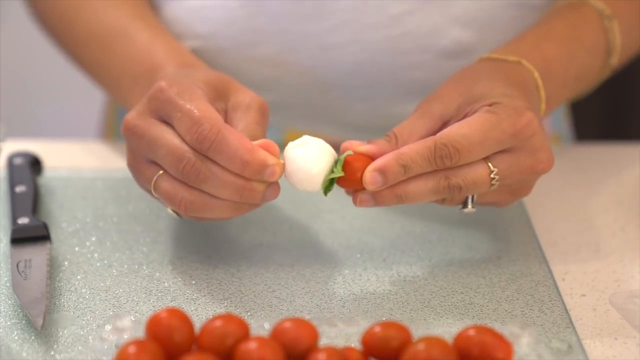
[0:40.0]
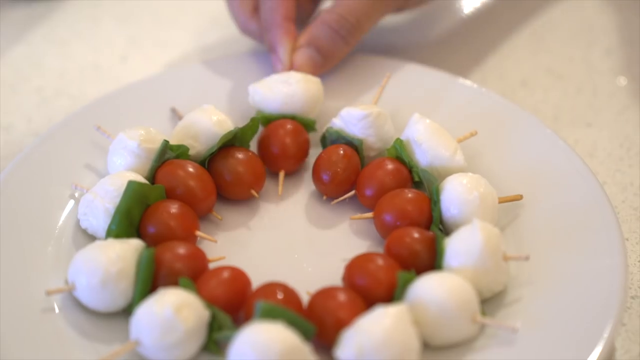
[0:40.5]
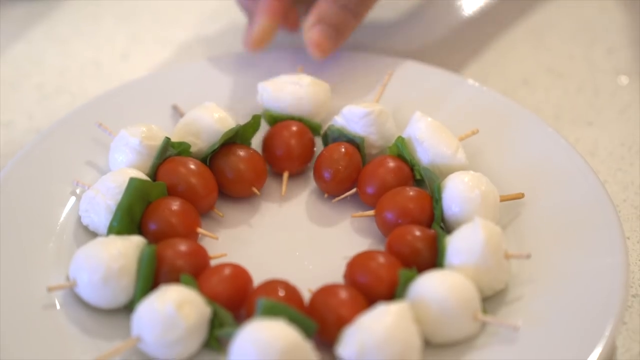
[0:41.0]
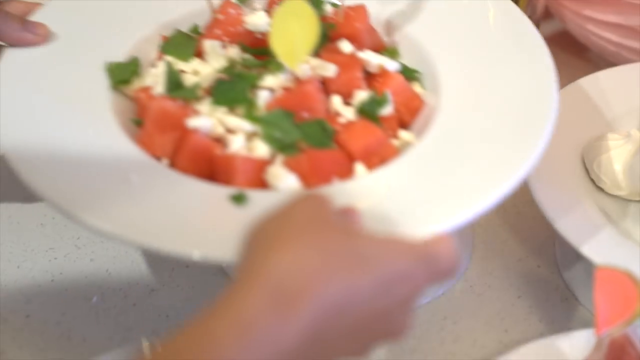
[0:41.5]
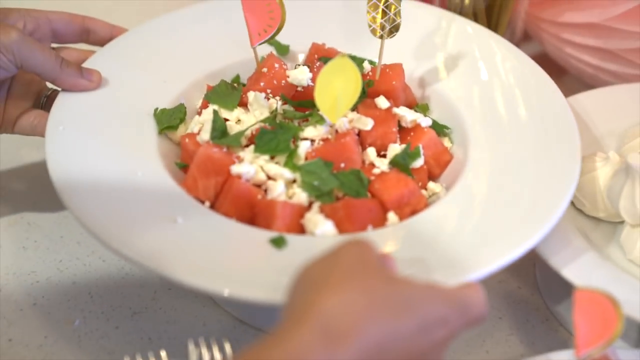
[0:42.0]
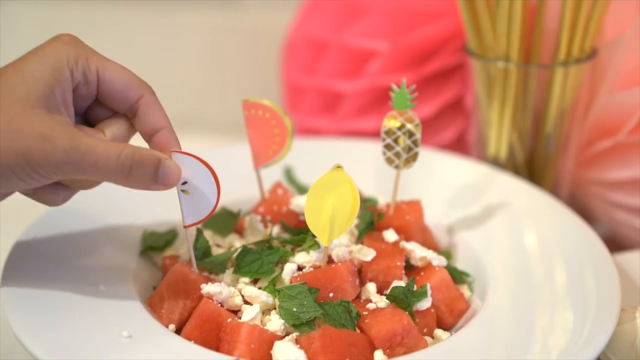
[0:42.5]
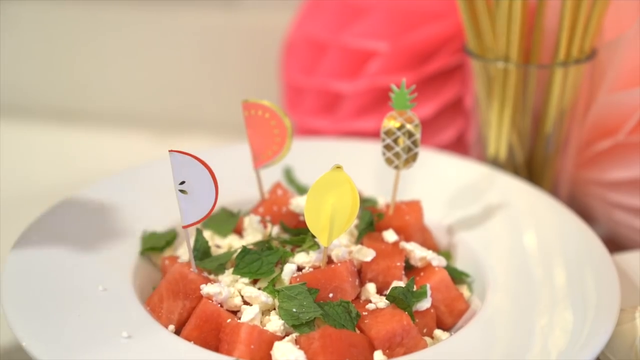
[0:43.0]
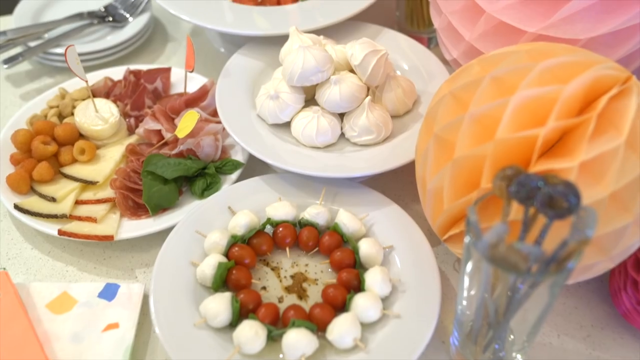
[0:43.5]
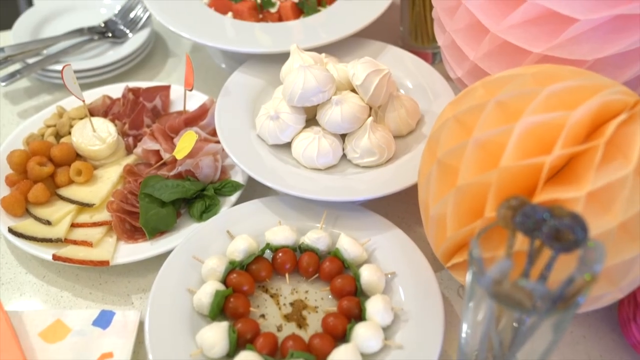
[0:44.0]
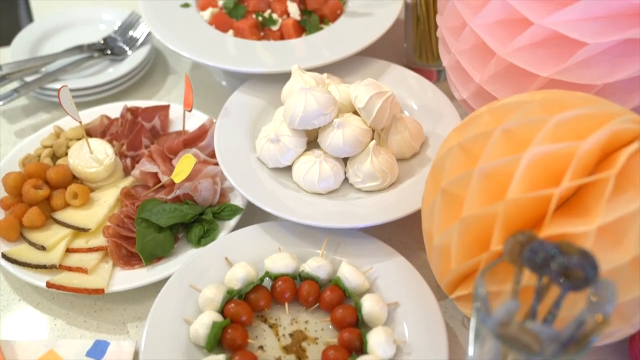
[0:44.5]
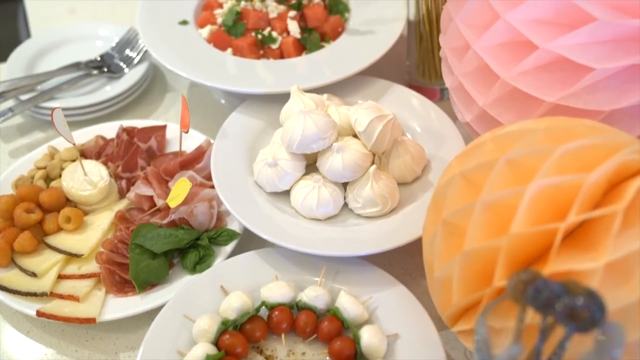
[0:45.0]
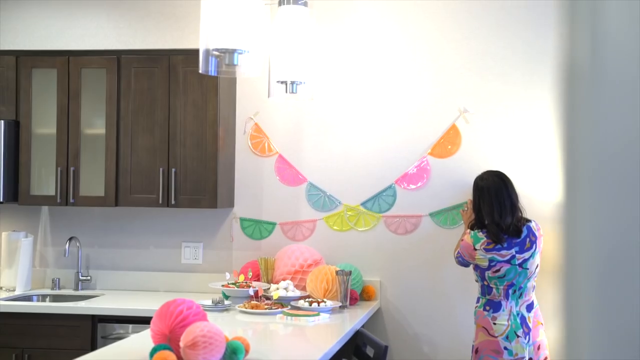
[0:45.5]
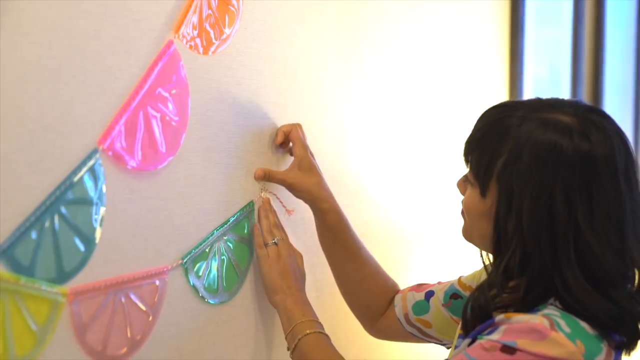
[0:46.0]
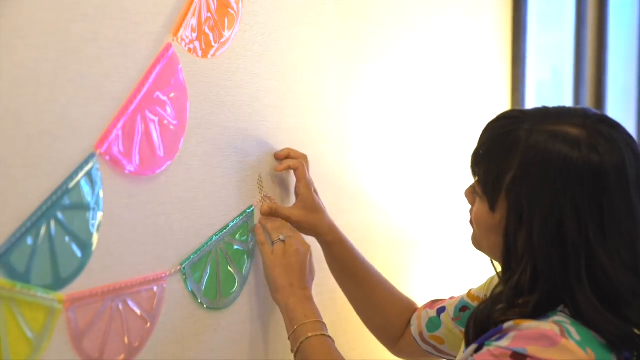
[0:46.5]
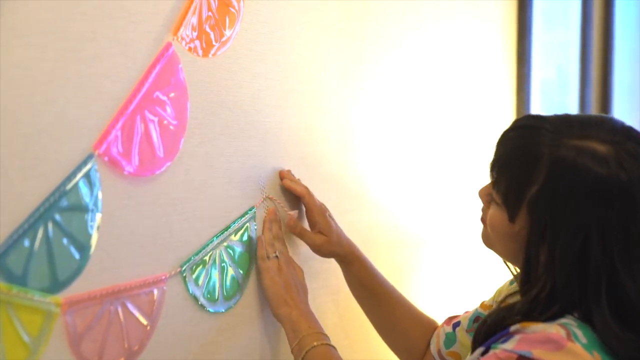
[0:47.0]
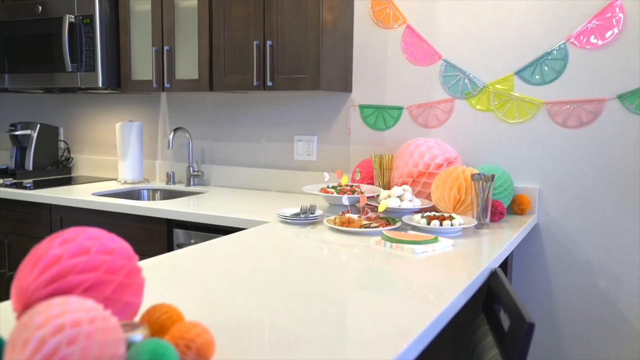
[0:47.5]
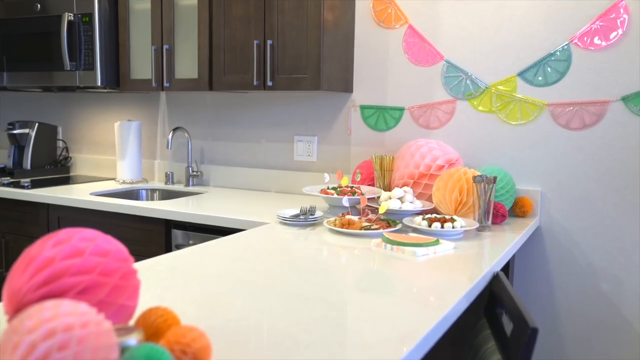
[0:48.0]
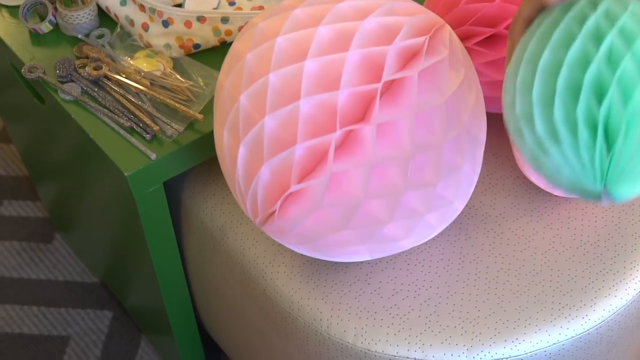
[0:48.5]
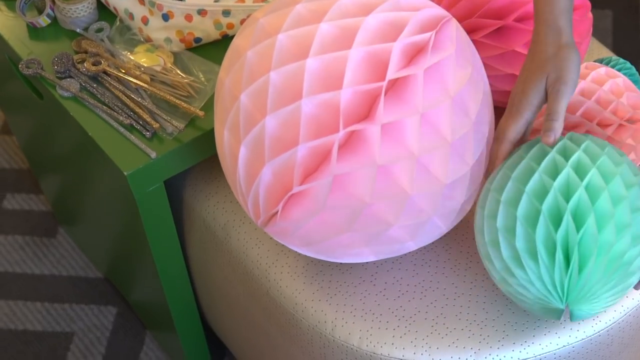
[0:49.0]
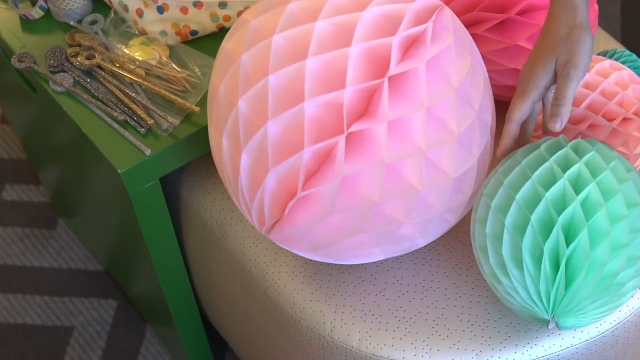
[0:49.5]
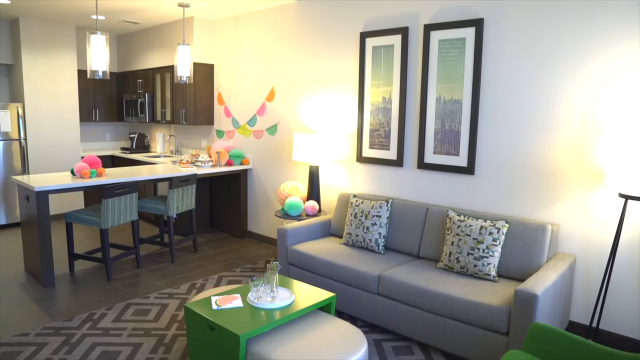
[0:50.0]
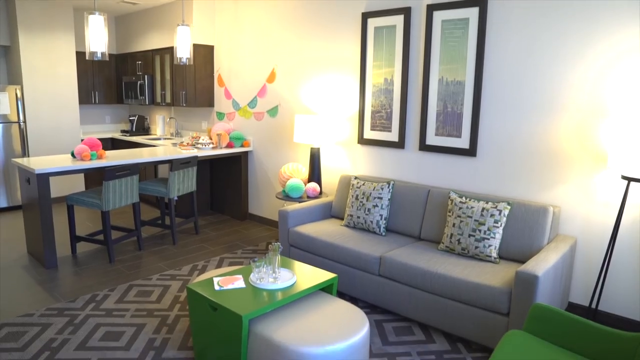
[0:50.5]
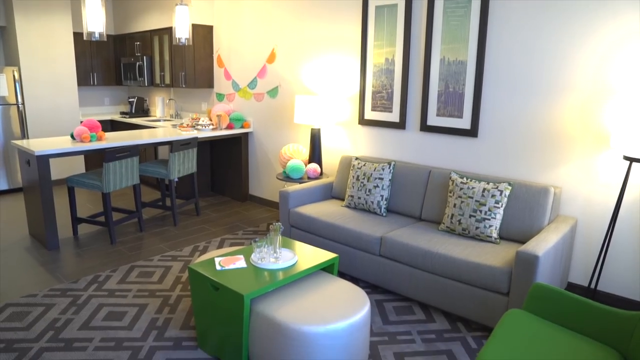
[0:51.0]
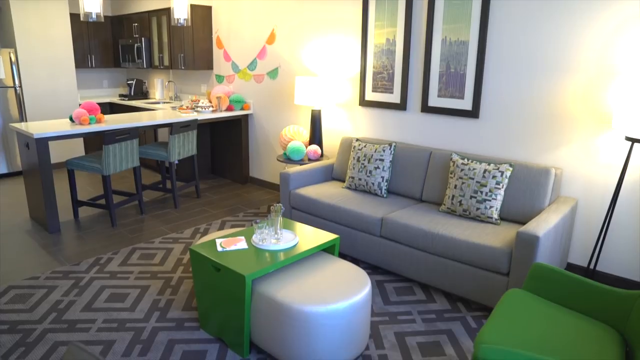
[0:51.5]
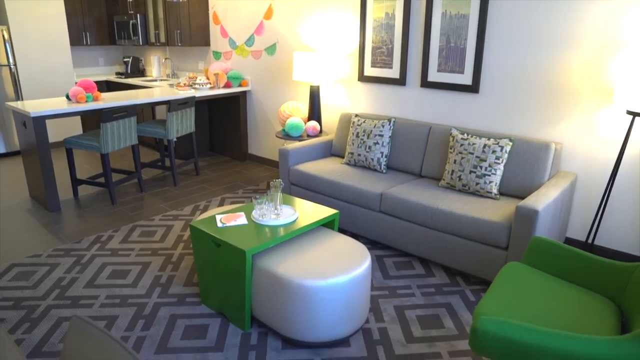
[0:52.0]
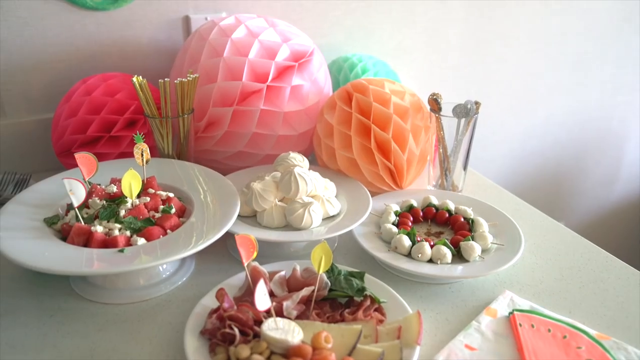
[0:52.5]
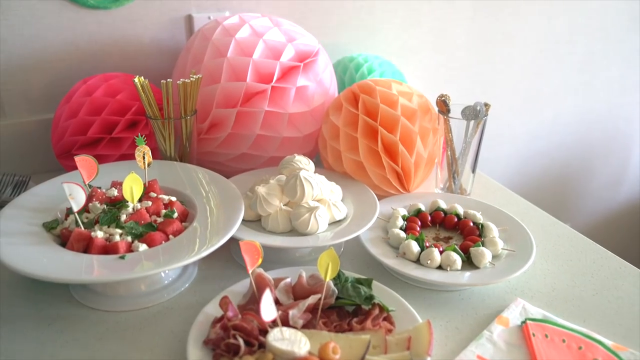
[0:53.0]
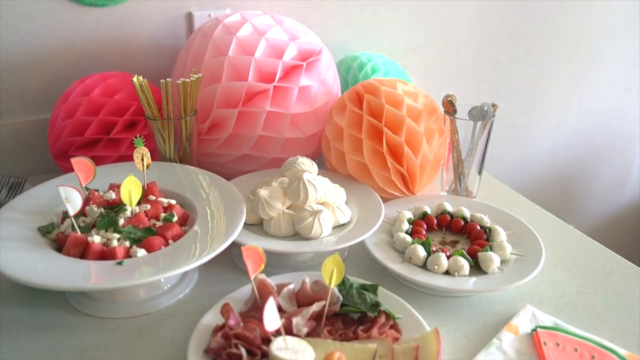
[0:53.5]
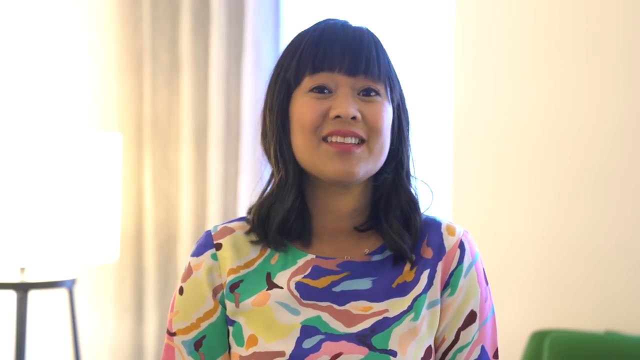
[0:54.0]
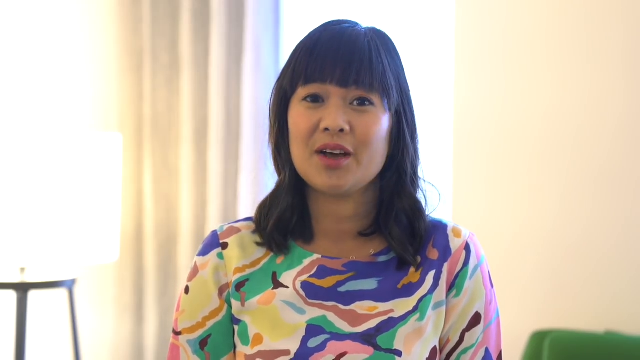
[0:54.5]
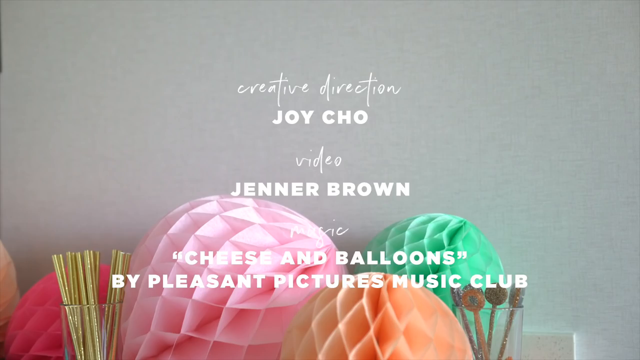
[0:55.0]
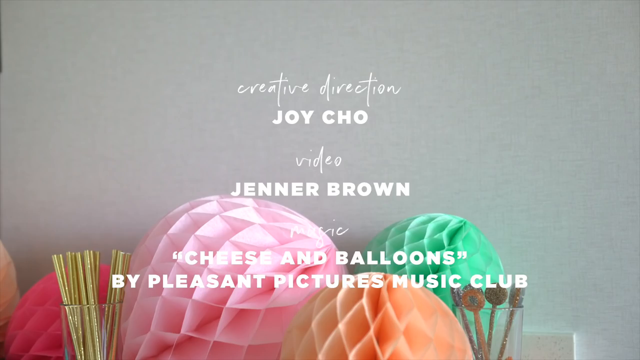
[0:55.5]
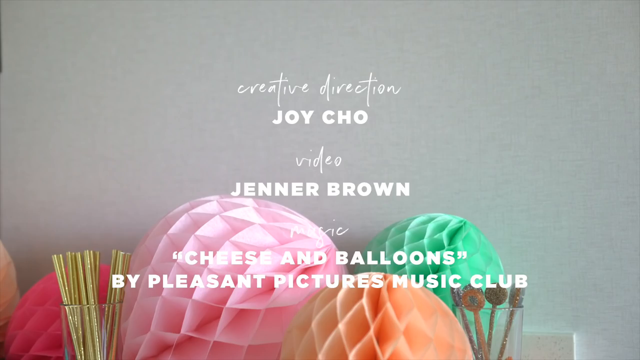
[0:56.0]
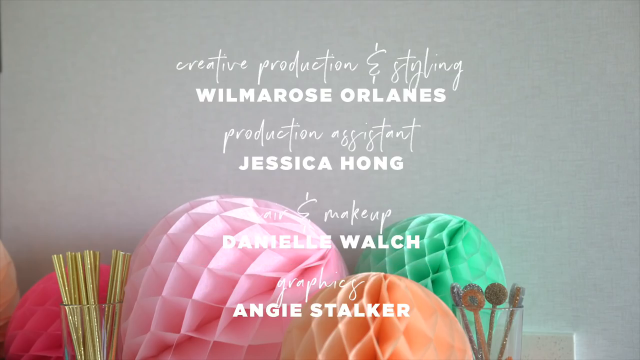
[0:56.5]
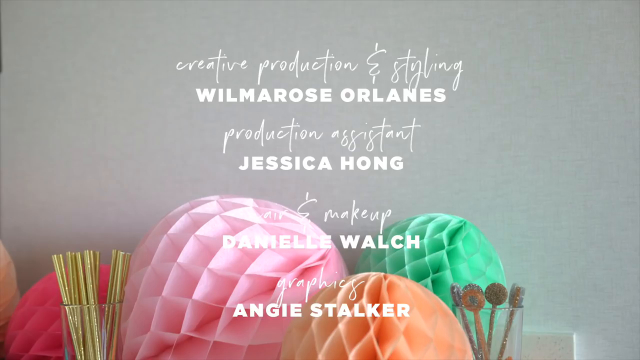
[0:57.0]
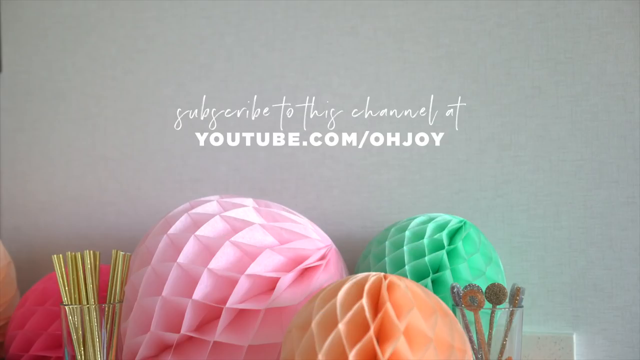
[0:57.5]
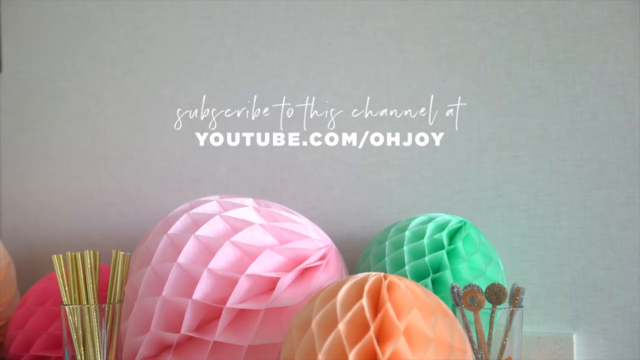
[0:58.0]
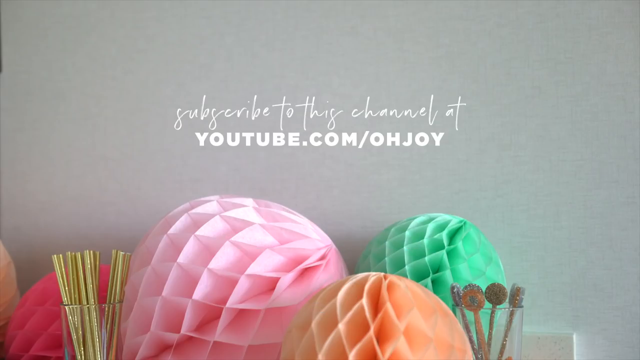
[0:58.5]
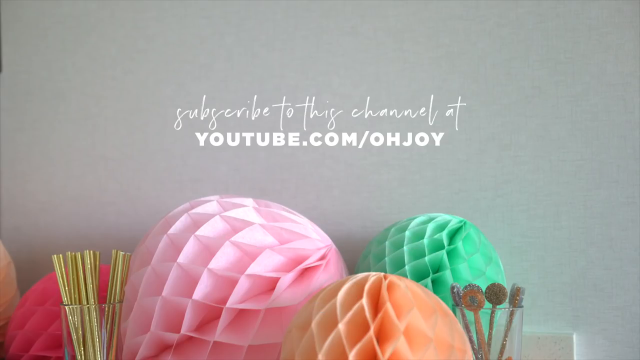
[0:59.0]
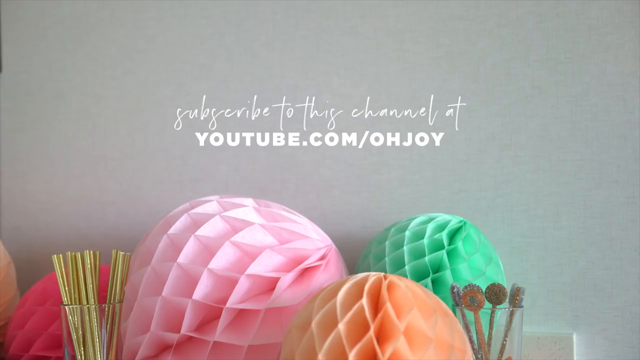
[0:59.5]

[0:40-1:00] The woman makes different types of party foods. One looks like a type of tomato with some sort of white object skewered on a long toothpick. She works with white plates. One plate holds red or pinkish cubes, unclear whether watermelon or salmon, that seem to have some sort of feta cheese crumbled over them along with some sort of green garnish, with toothpicks sticking out of each one. A shot shows a bunch of plates on a table: one plate holds the tomato toothpicks, along with what looks to be some sort of cream-type cookie that is dumpling shaped but apparently not a dumpling, possibly a sweet dessert. There is also what looks to be charcuterie on a white saucer, with cheeses, meat and what looks to be some sort of tomatoes. Shots show her putting plastic half-circle decorations across the wall, followed by more shots of the paper honeycombs and garlands.